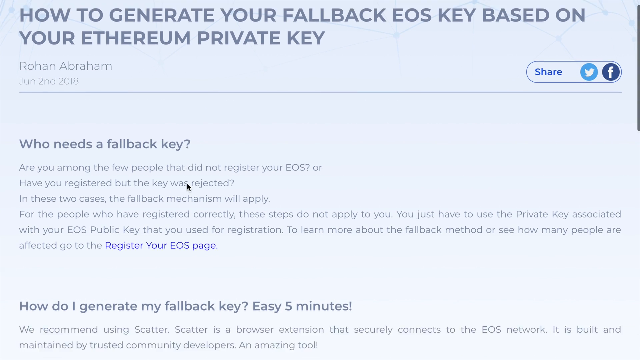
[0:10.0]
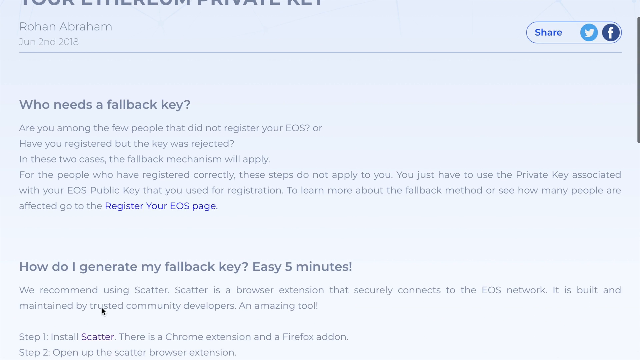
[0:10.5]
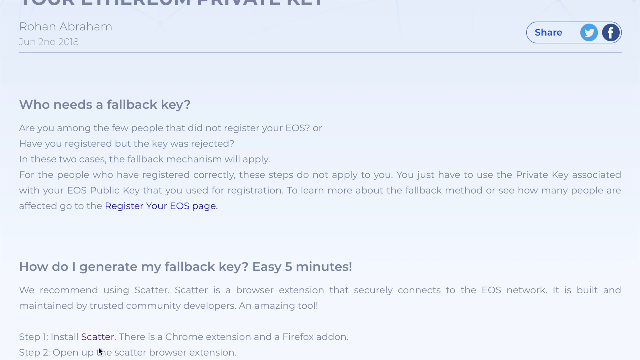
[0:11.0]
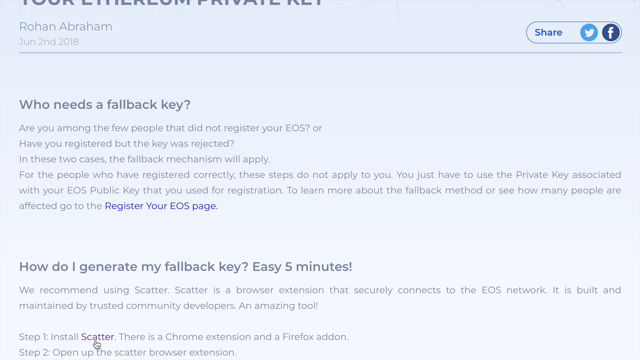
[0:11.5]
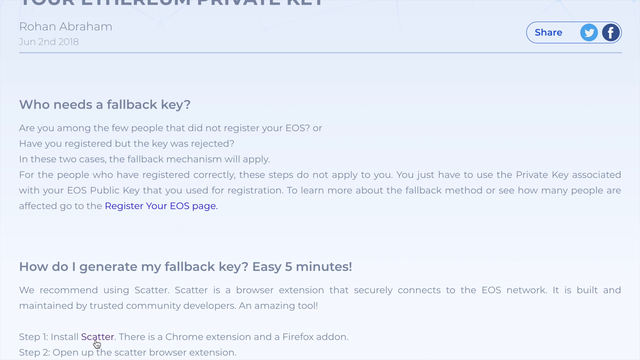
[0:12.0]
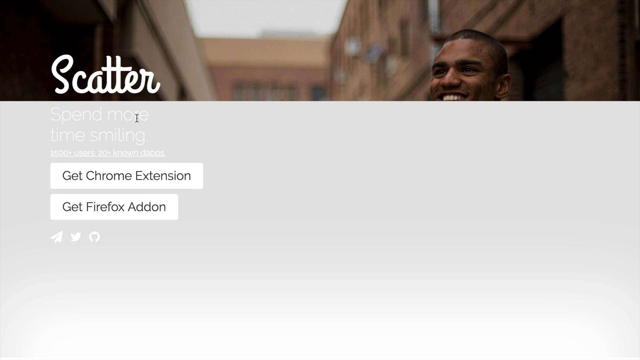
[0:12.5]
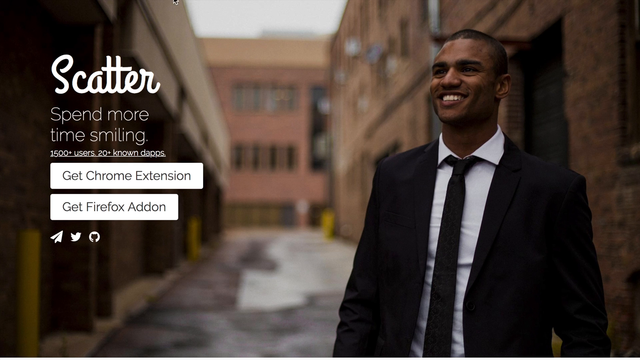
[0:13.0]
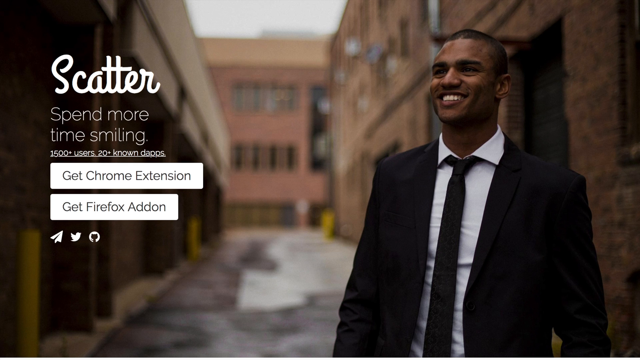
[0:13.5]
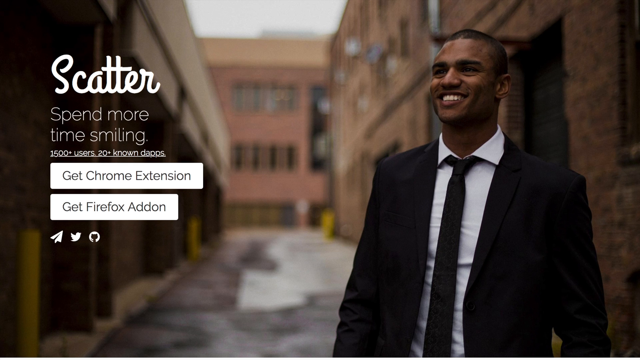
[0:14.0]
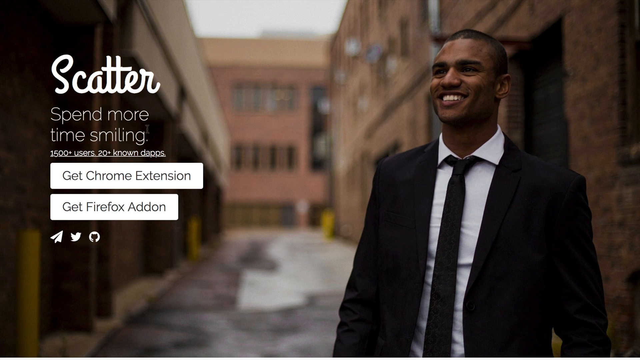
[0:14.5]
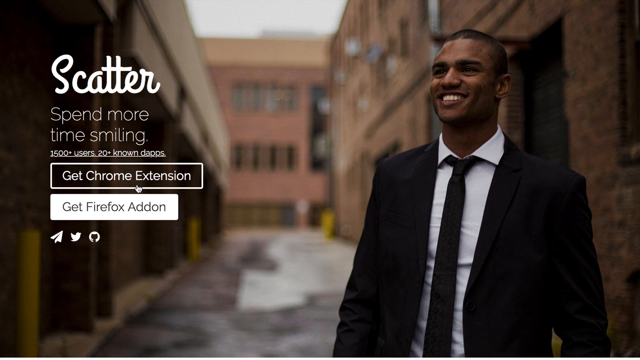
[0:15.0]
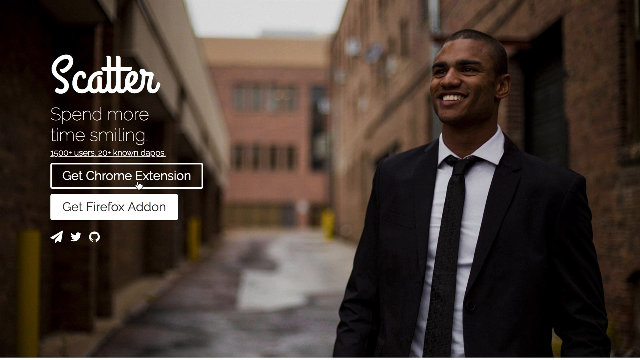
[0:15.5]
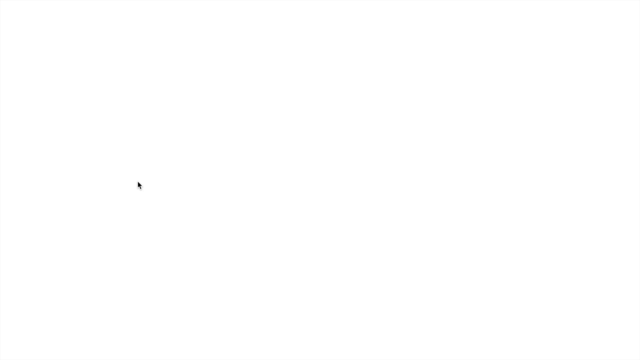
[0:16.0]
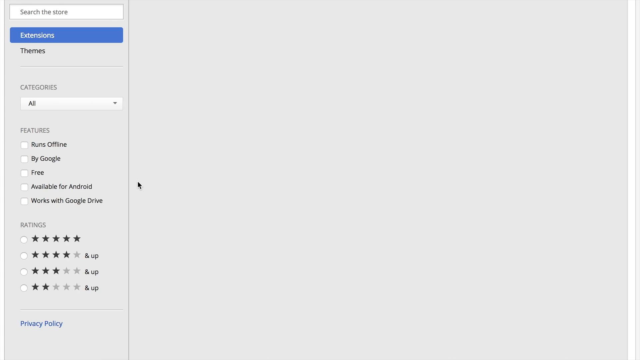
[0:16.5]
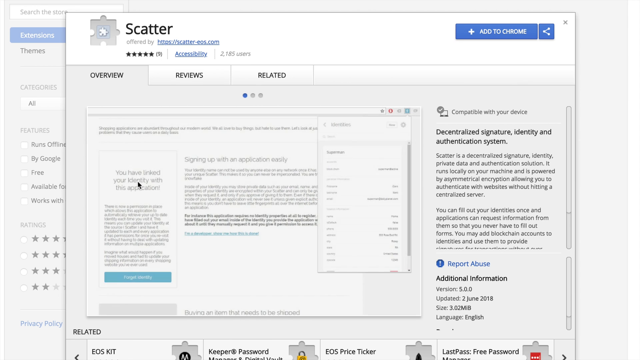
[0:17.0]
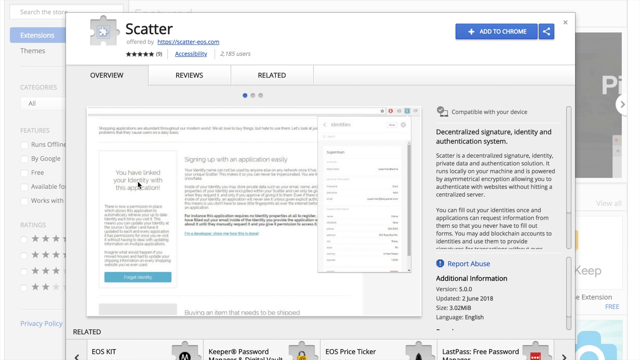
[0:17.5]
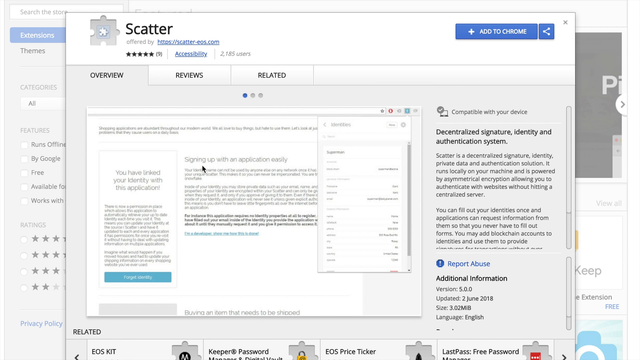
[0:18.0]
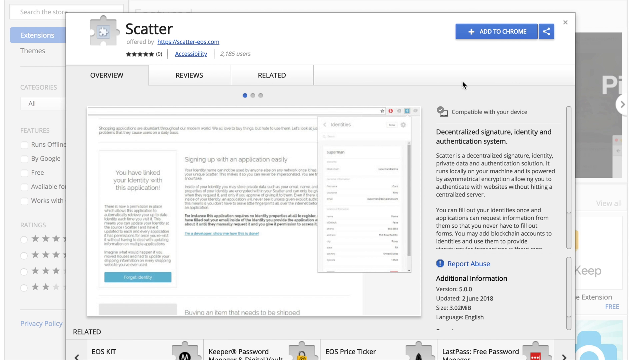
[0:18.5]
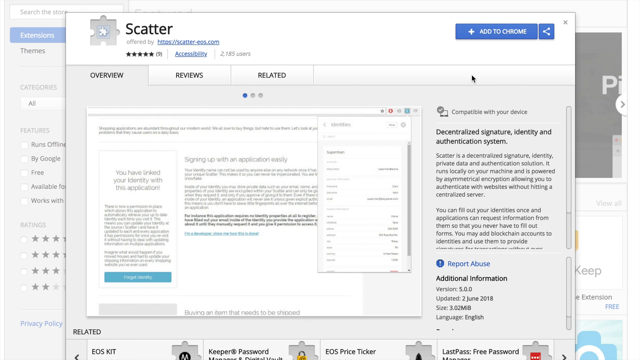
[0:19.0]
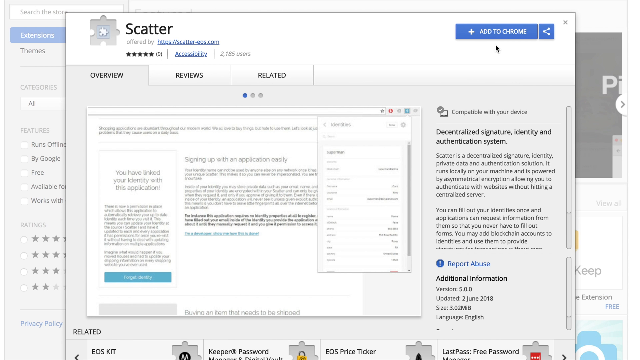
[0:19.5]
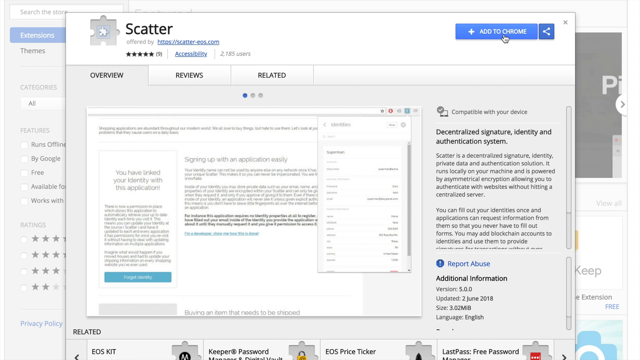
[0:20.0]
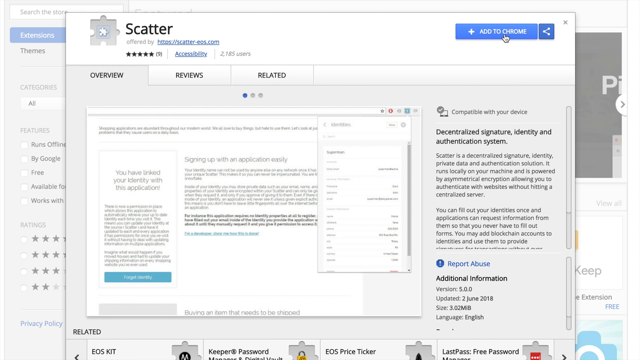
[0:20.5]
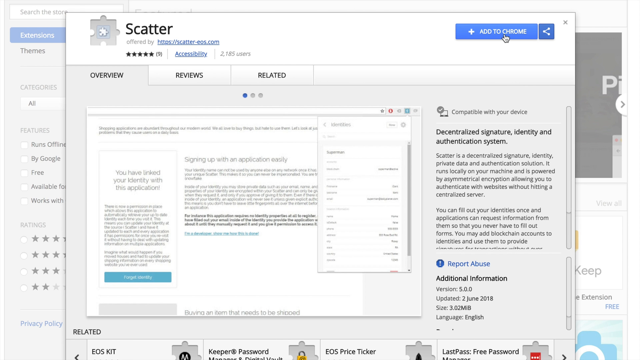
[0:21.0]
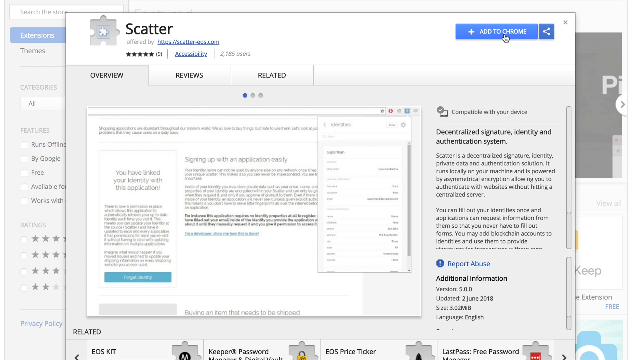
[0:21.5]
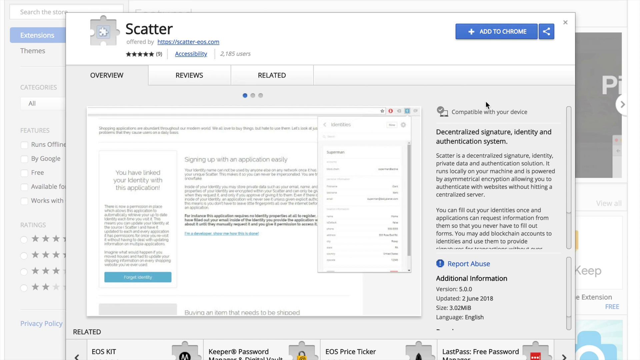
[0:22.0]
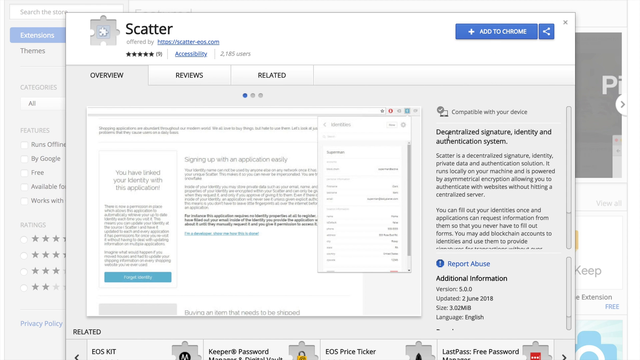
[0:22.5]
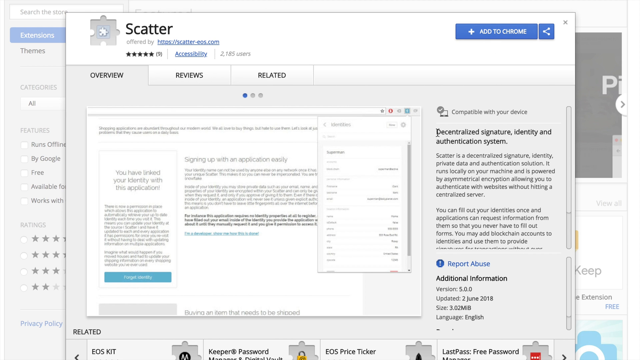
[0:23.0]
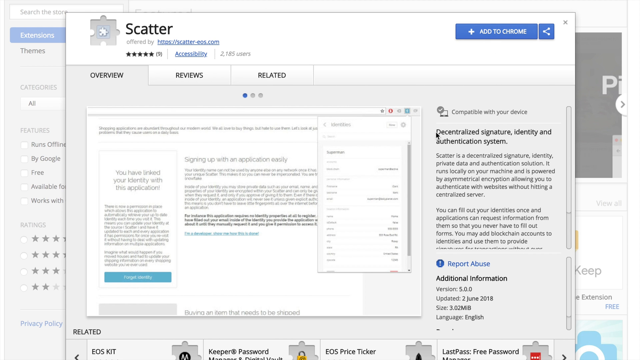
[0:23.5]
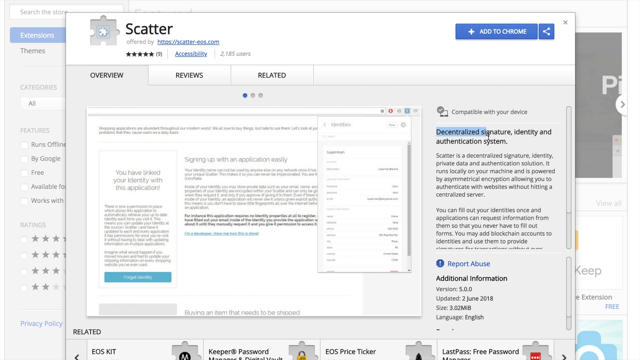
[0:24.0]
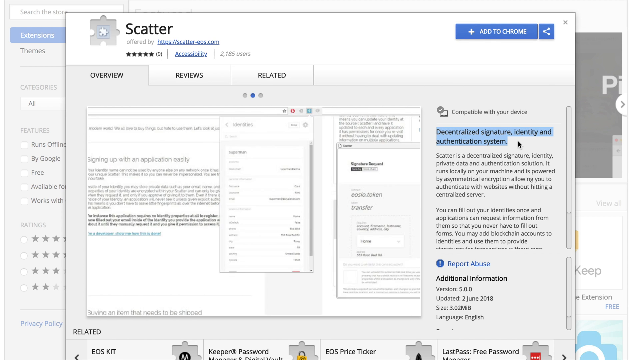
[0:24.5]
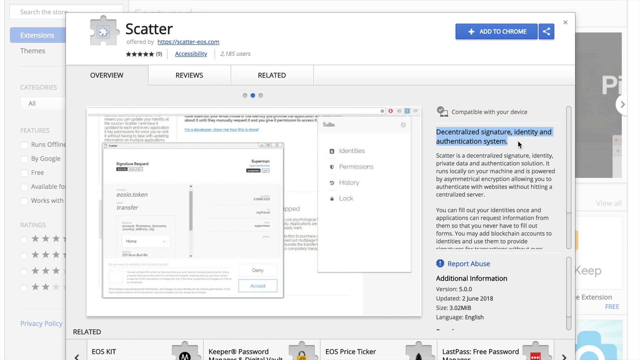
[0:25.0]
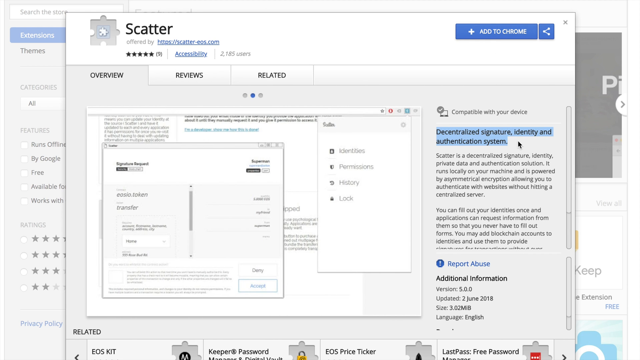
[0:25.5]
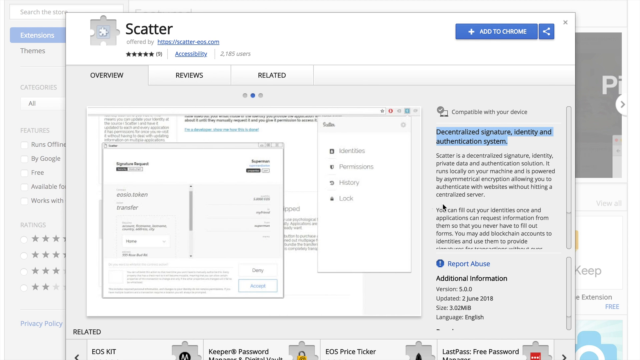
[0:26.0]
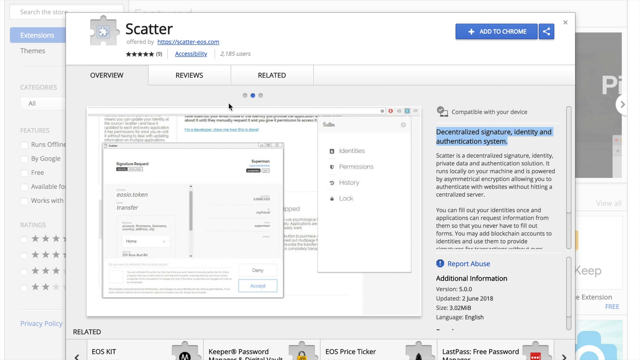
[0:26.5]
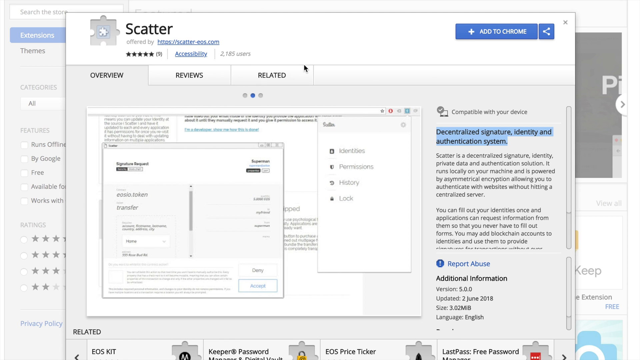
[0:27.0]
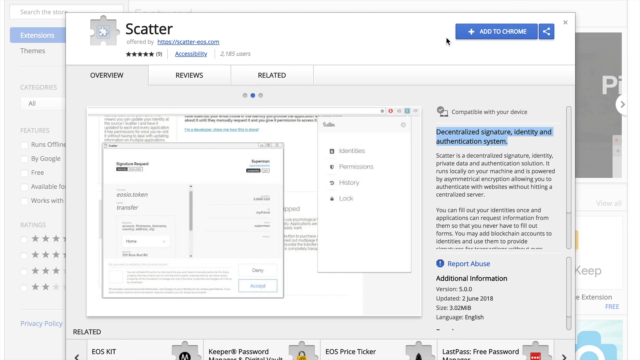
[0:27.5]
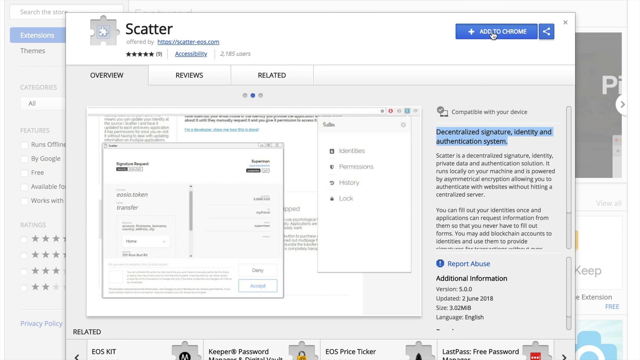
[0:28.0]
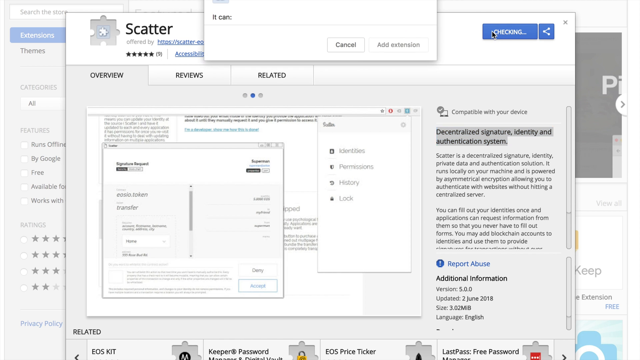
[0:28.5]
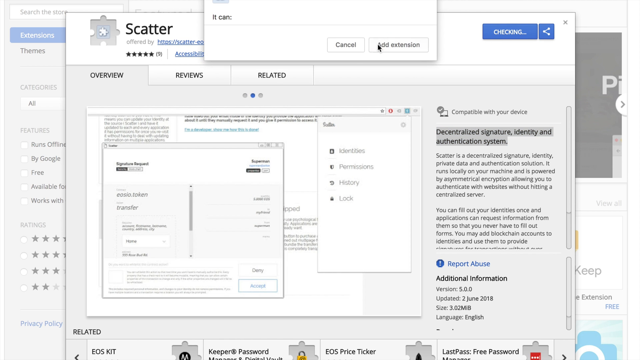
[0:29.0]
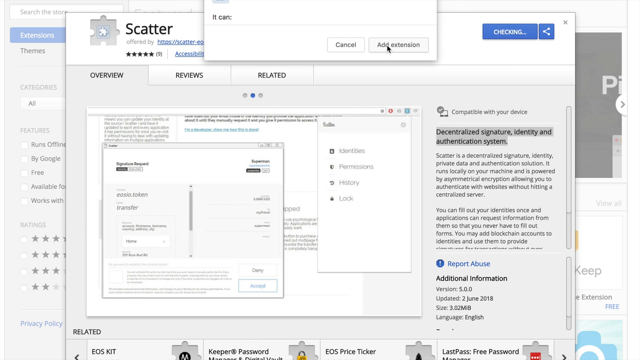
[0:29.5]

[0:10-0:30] The video shows different ways to add this to the Chrome browser. A pop-up message shows information such as the overview, the reviews, and related information. It then goes back to the website, which shows how to generate a Fallback EOS key based on an Ethereum private key, with information and different links to click for more information. A pop-up of a black man in a suit briefly appears. The first bullet point is "who needs a fallback key". At the very beginning of the page are the name Rohan Abraham and the date it was written, along with a Twitter link and a Facebook link.